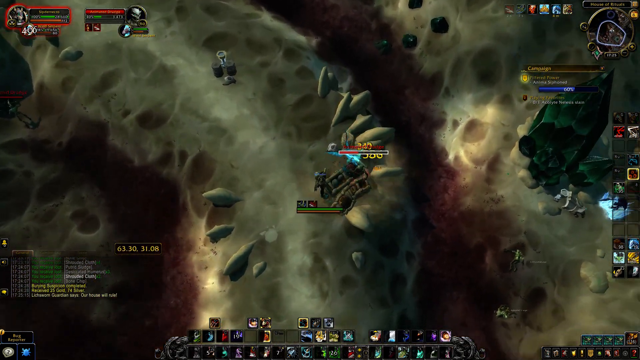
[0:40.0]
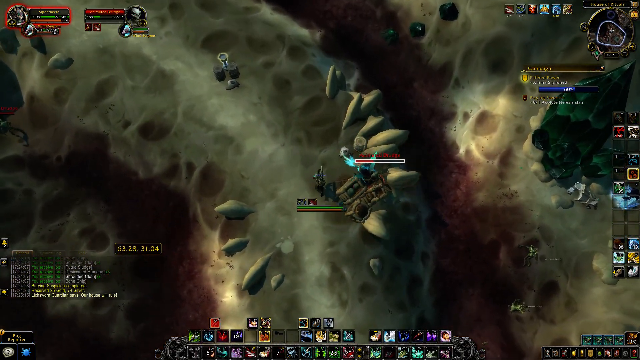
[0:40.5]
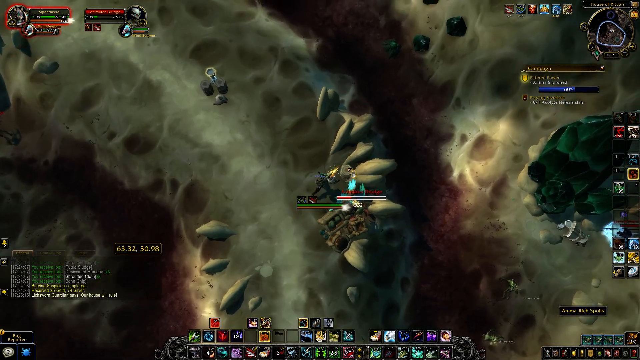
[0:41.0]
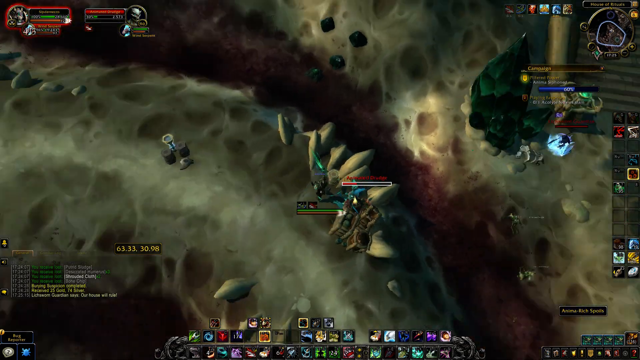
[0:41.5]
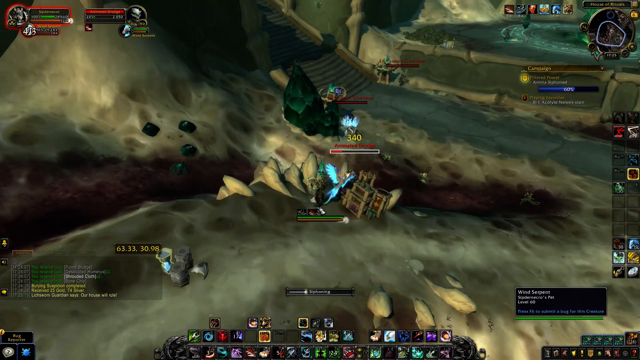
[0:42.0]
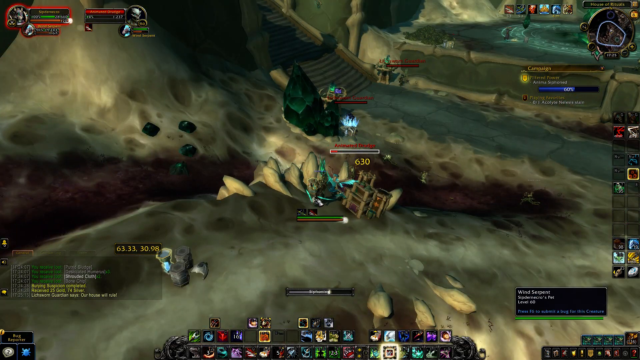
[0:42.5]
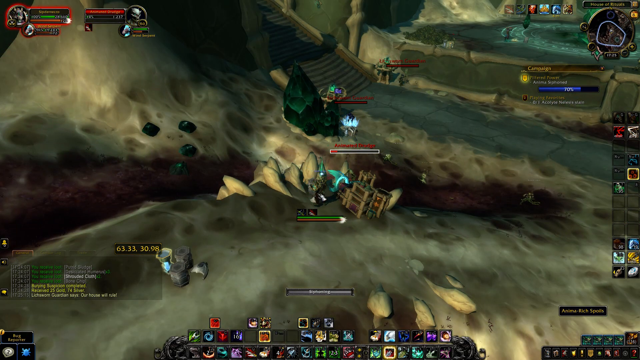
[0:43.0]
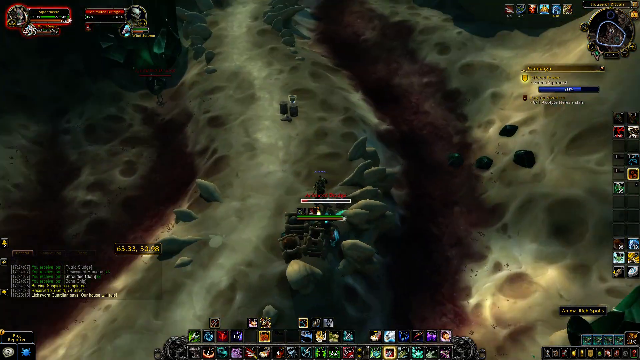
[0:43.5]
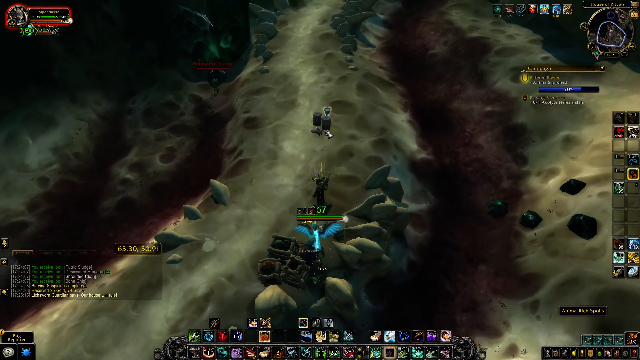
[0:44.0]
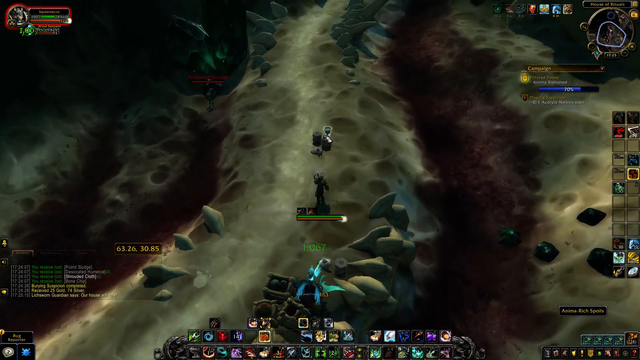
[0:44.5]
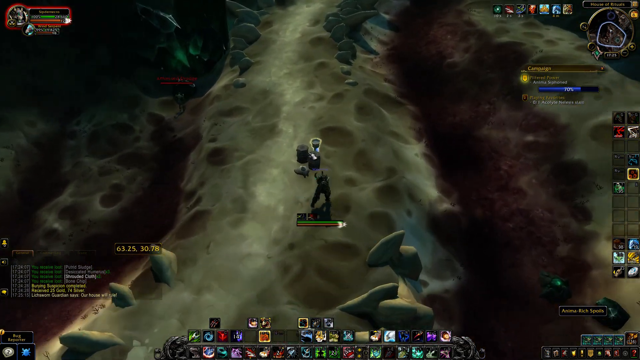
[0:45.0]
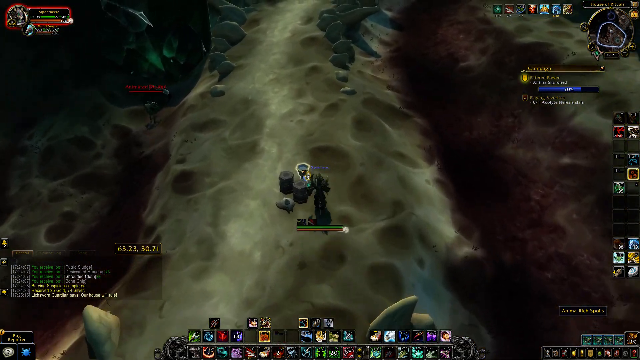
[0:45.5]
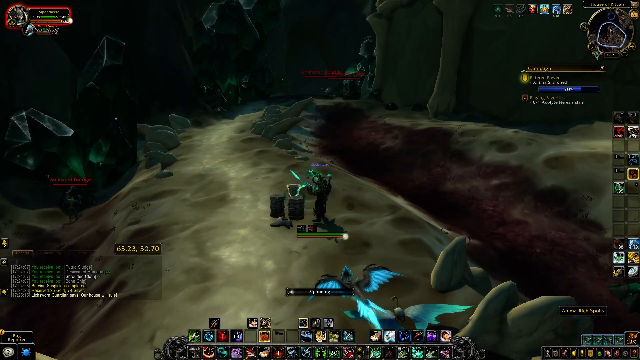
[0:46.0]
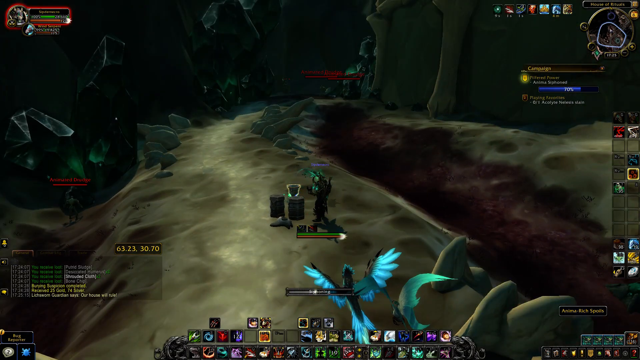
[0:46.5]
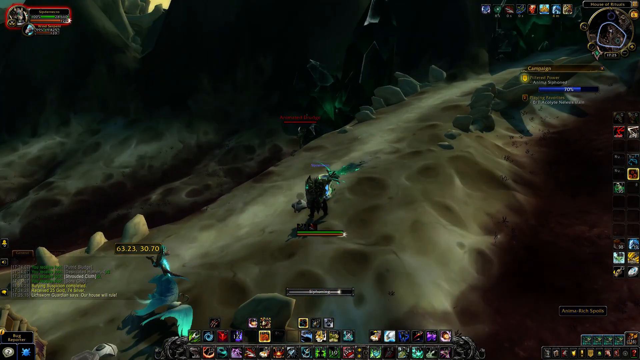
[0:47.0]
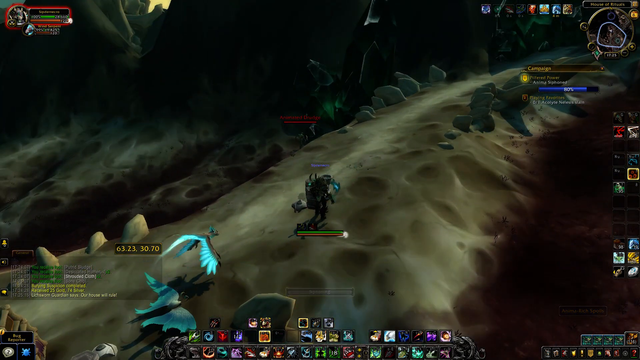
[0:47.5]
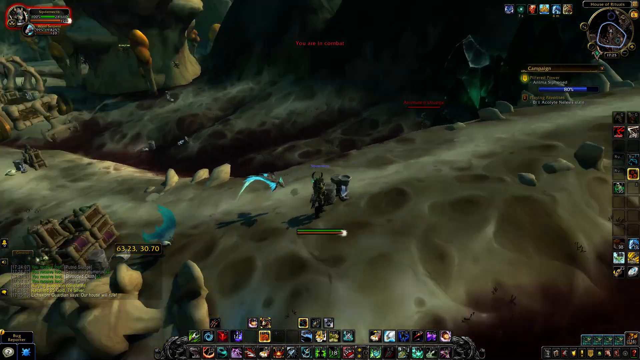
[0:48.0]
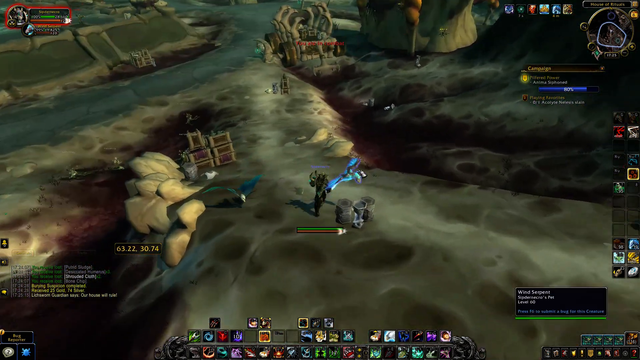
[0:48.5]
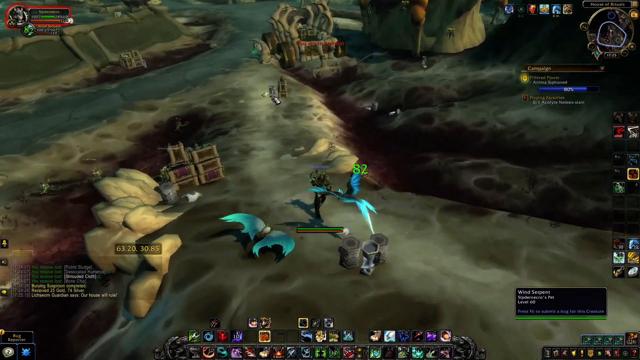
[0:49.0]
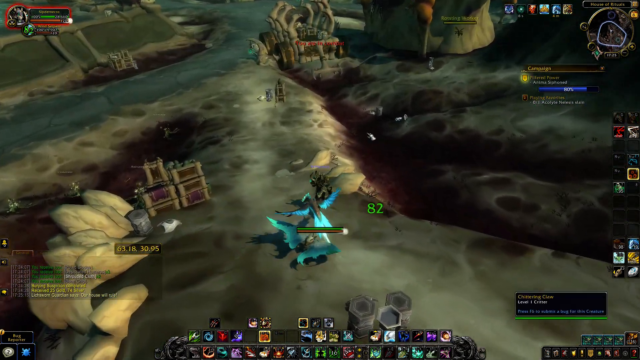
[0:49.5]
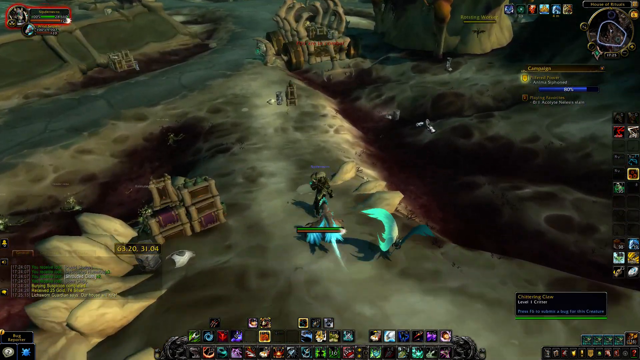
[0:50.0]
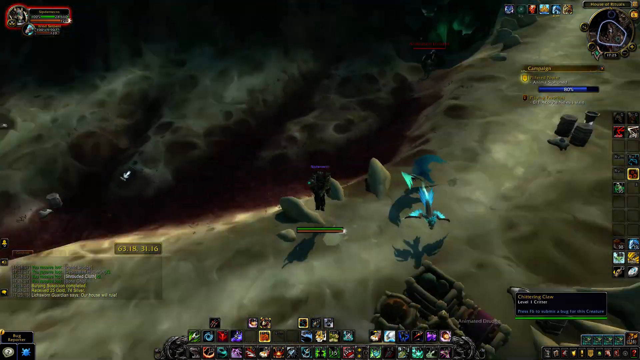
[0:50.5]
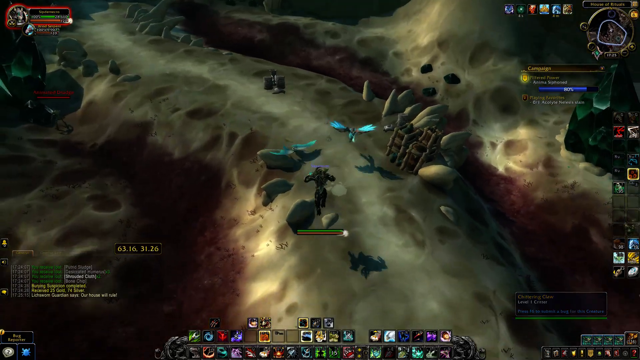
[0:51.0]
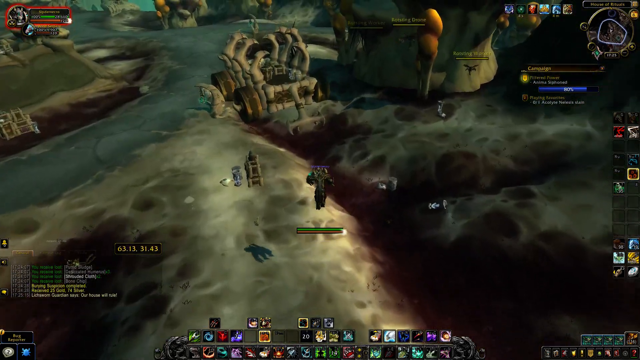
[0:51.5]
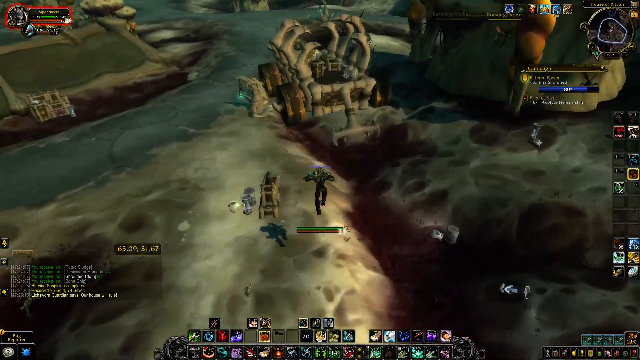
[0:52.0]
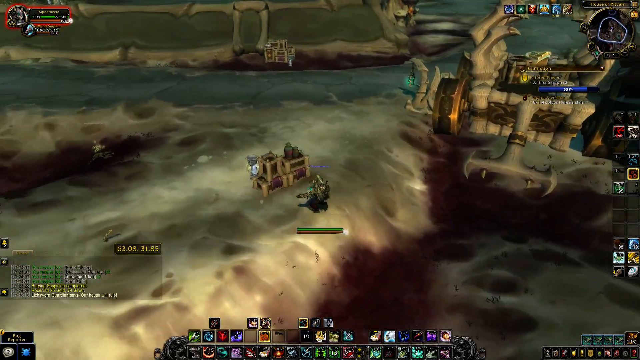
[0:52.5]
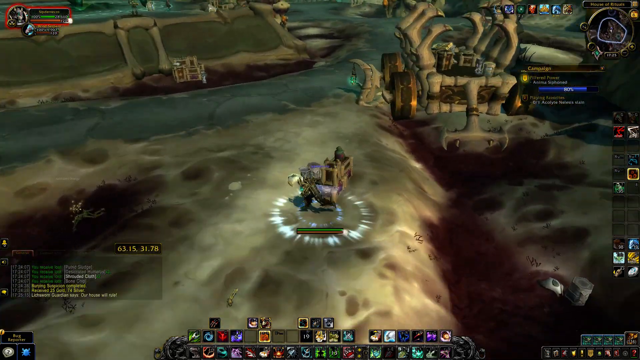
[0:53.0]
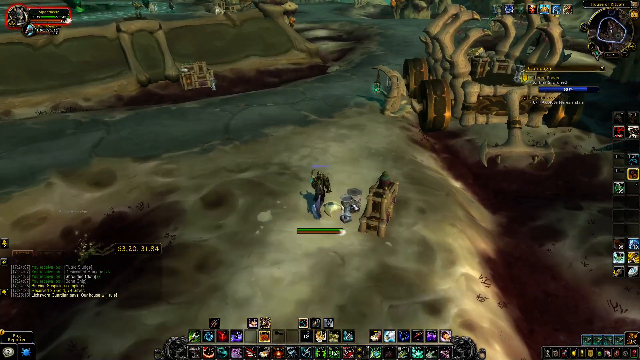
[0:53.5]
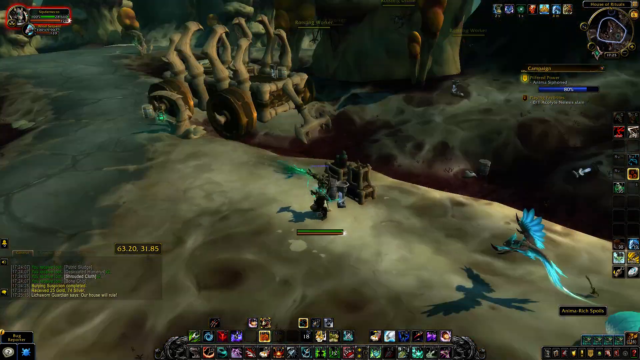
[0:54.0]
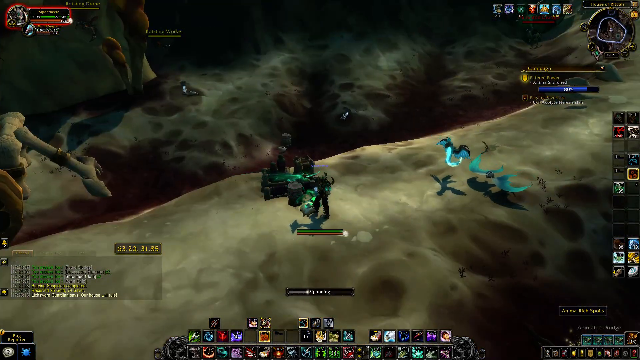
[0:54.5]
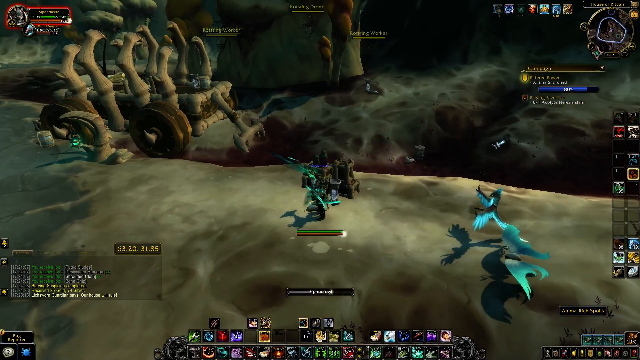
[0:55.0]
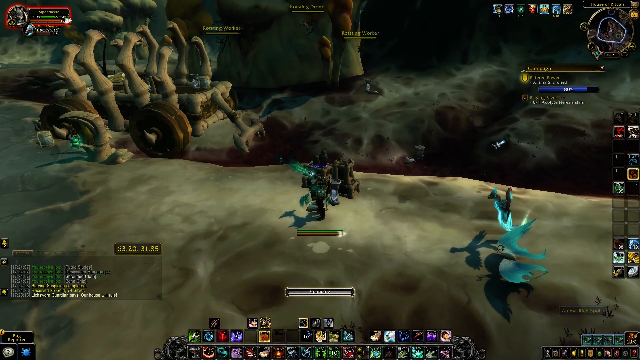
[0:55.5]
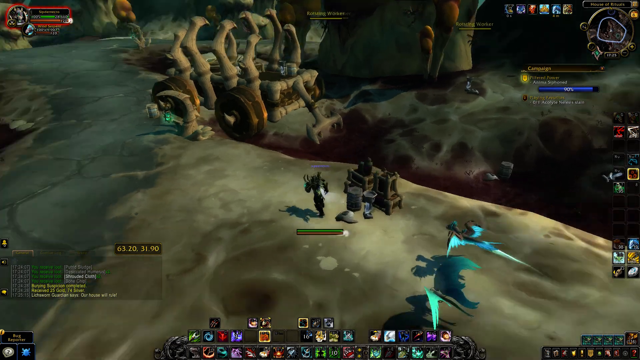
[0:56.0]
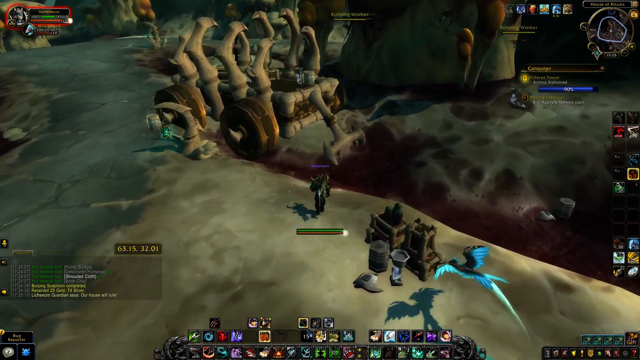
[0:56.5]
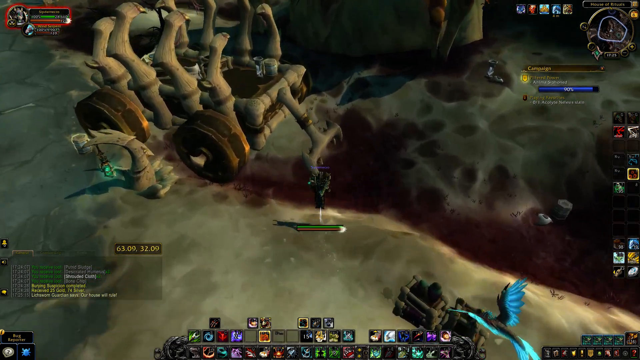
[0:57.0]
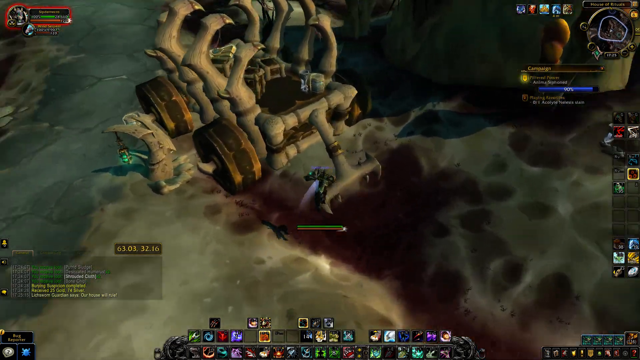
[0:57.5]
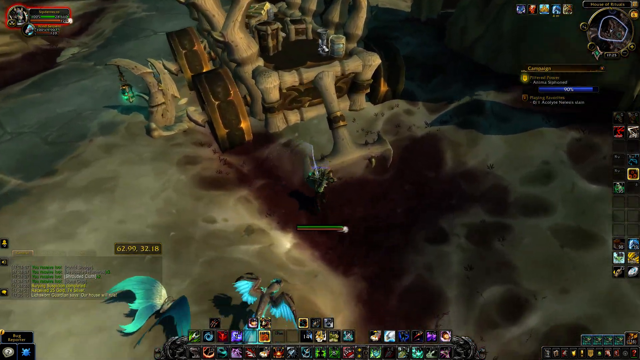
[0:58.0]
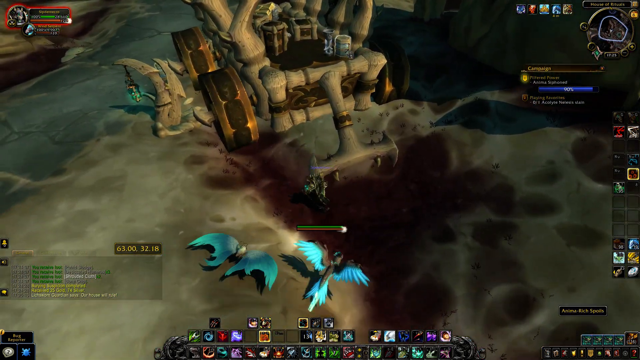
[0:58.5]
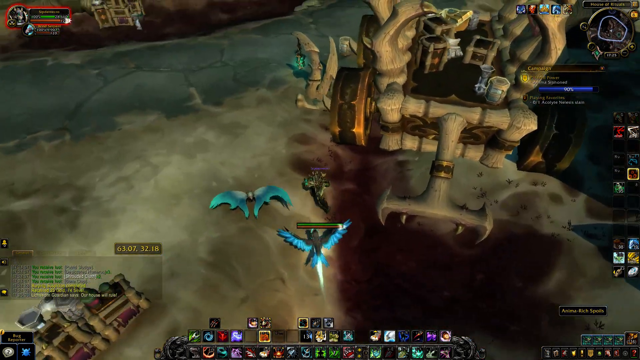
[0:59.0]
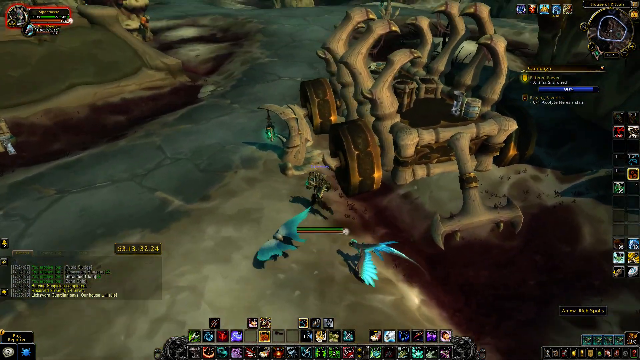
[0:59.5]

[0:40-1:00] The robot character keeps running, stopping at different objects, and the two birds continue following him from time to time. Green lines still go between the robot character and the two birds. He goes to another structure that looks like a miniature cabin, apparently powering up or maybe resting, which allows him to power up; he is maybe resting beside objects so that he is kind of hiding as he rests. He goes to what looks like a giant jeep, and the birds keep following him. One of the birds seems to fly a little faster than the other, but both are pretty close to him. Around the top, right, and bottom of the screen there is information about the game.